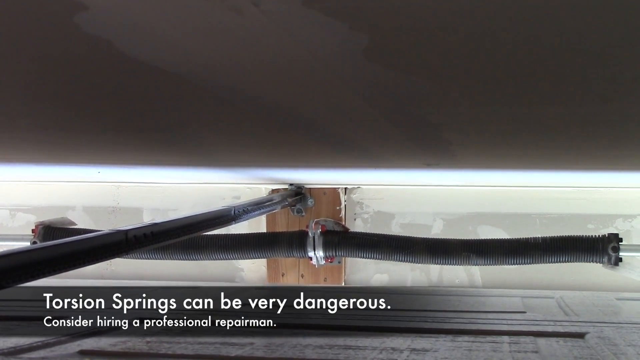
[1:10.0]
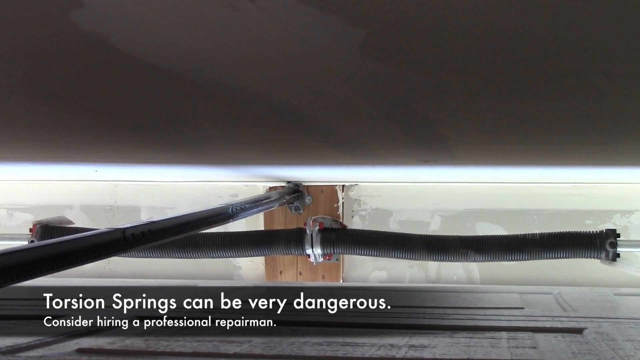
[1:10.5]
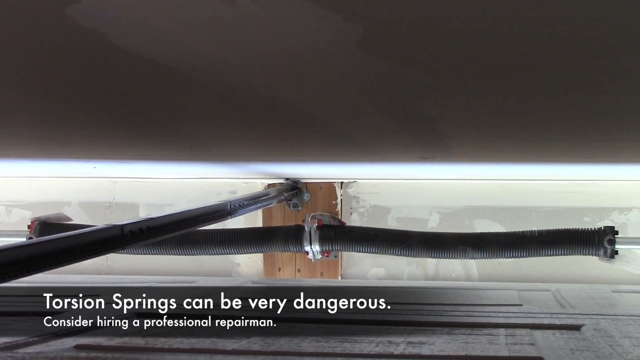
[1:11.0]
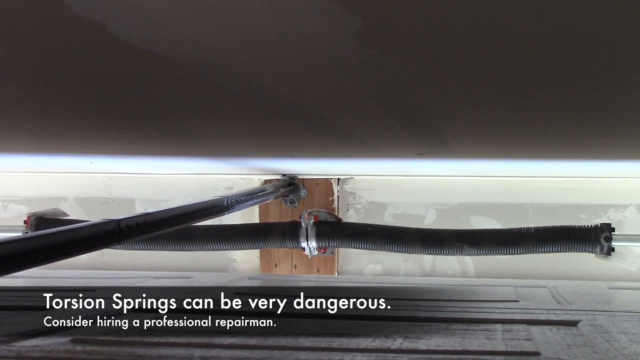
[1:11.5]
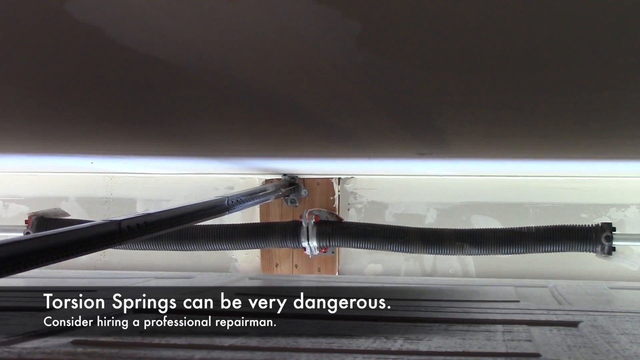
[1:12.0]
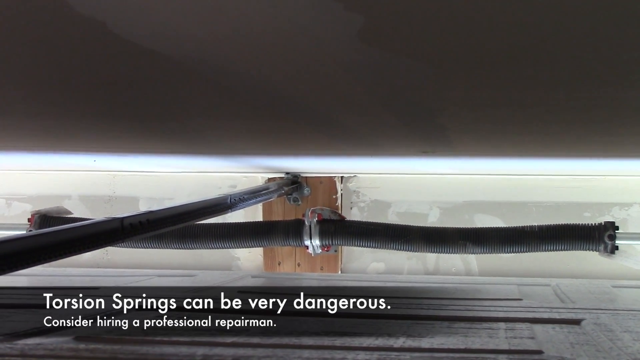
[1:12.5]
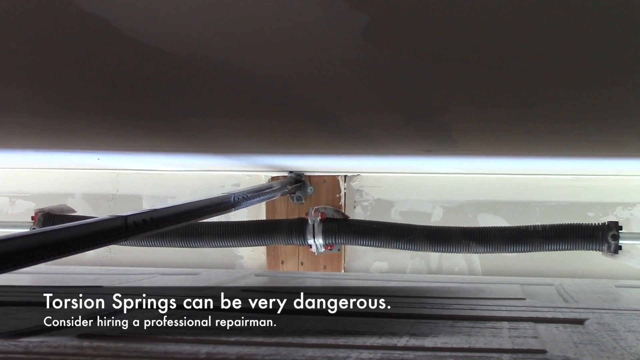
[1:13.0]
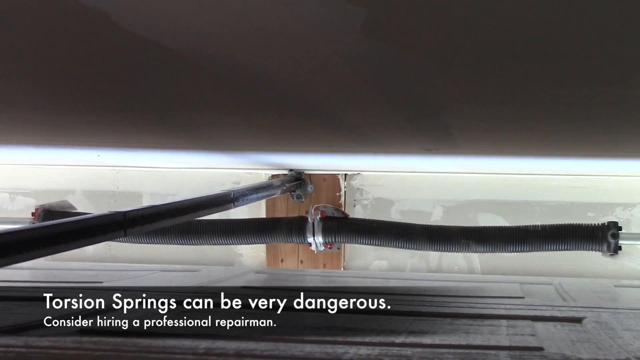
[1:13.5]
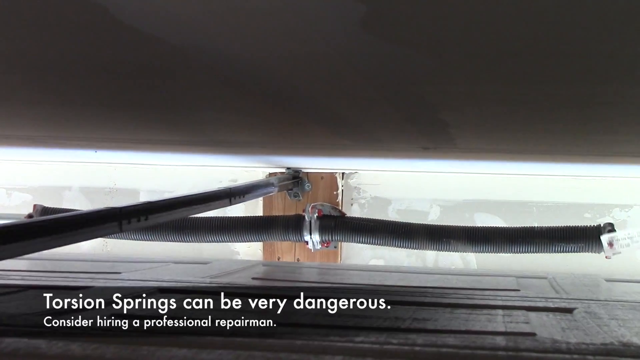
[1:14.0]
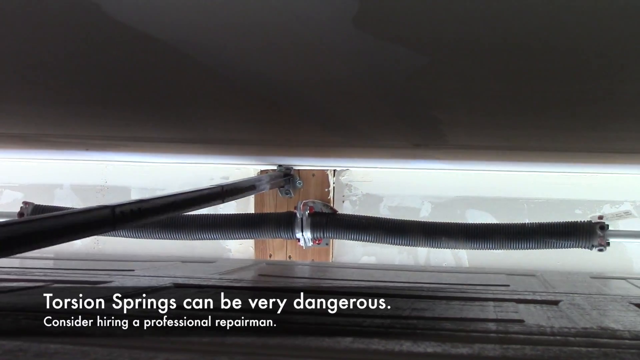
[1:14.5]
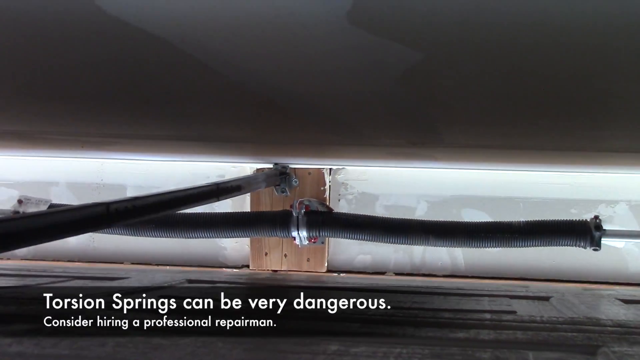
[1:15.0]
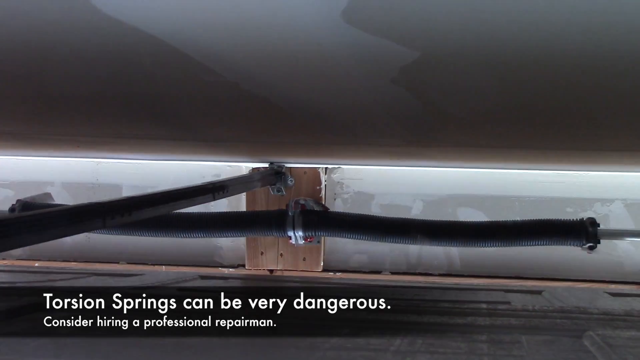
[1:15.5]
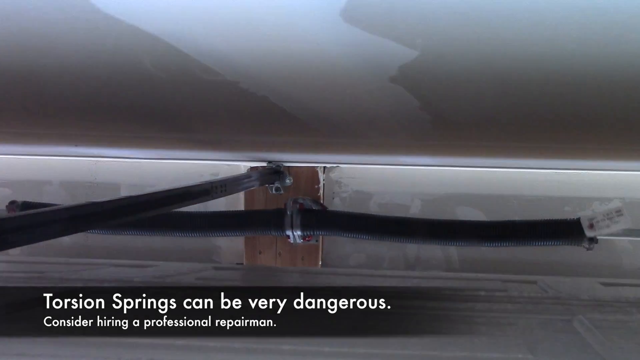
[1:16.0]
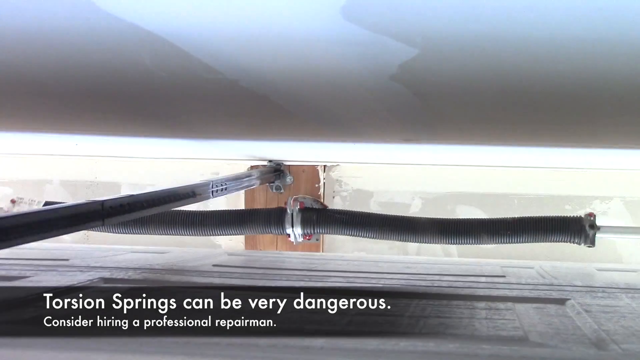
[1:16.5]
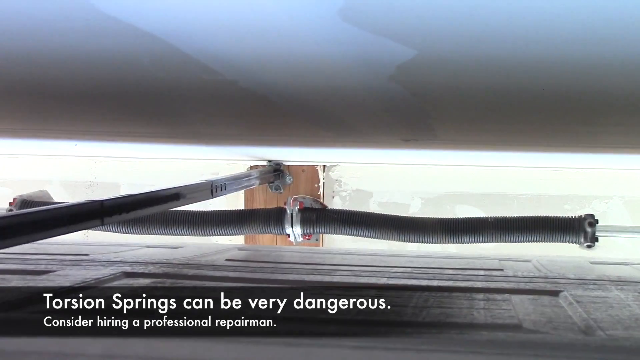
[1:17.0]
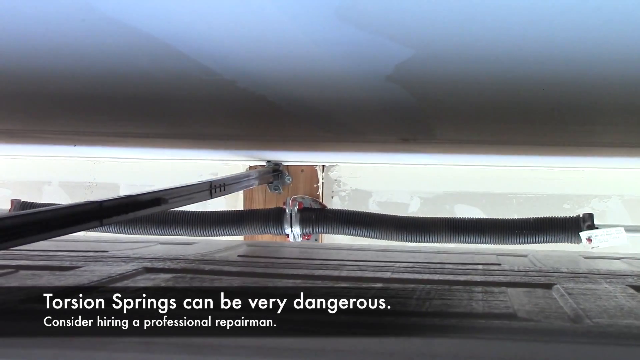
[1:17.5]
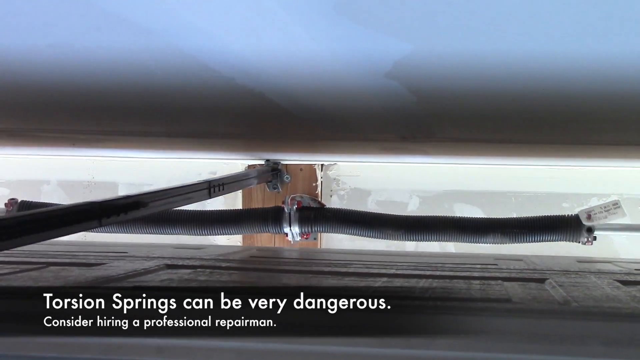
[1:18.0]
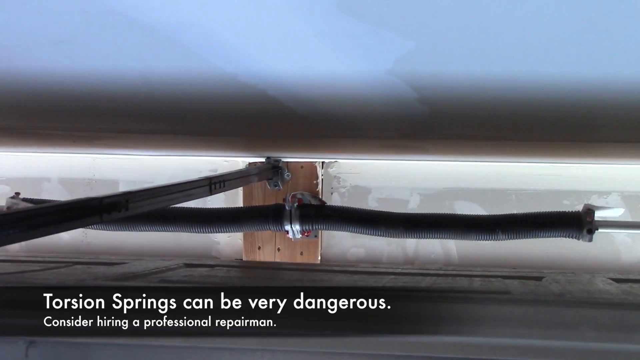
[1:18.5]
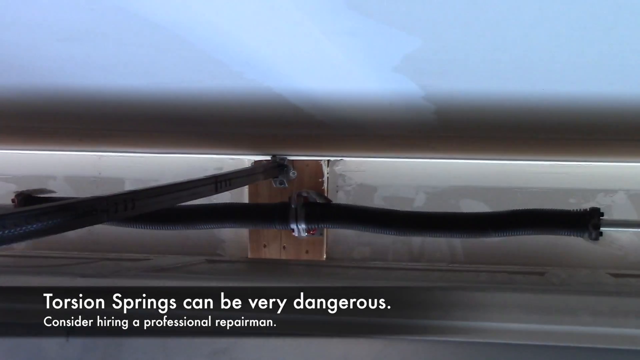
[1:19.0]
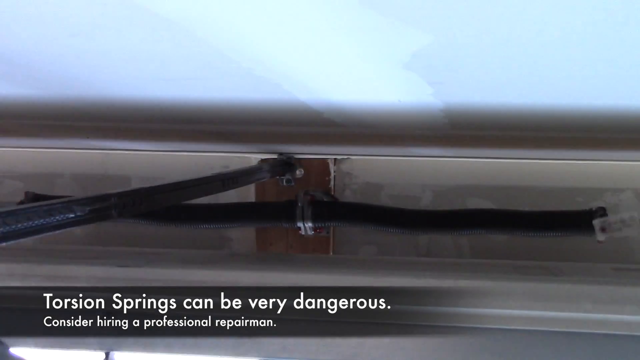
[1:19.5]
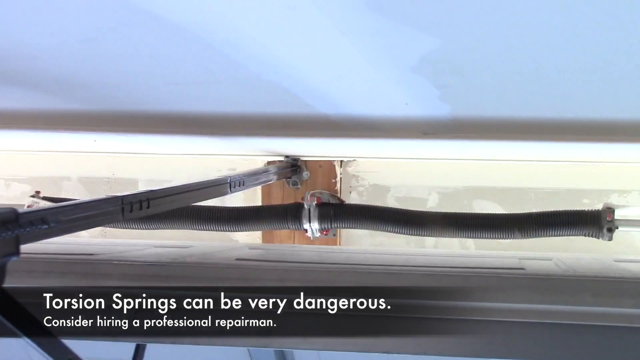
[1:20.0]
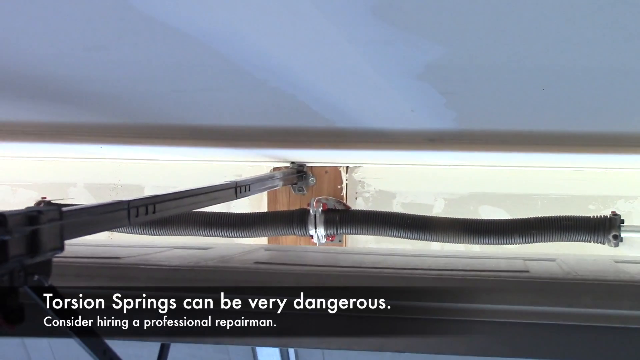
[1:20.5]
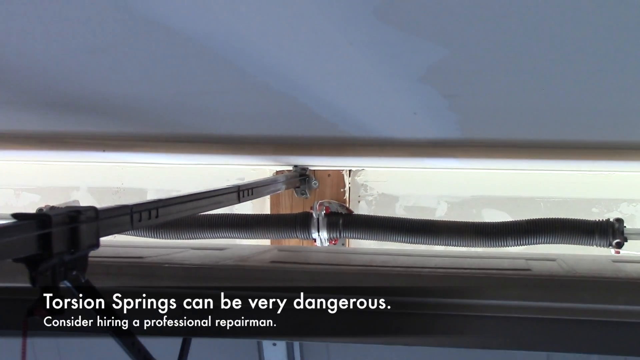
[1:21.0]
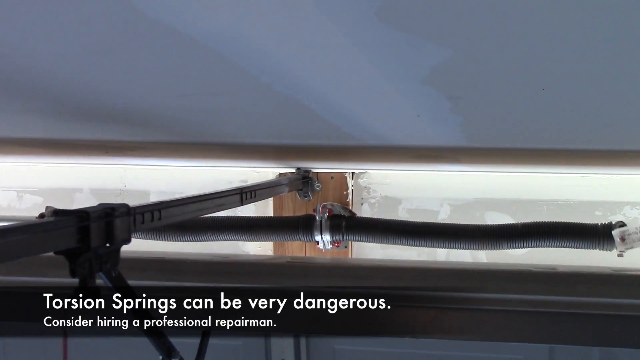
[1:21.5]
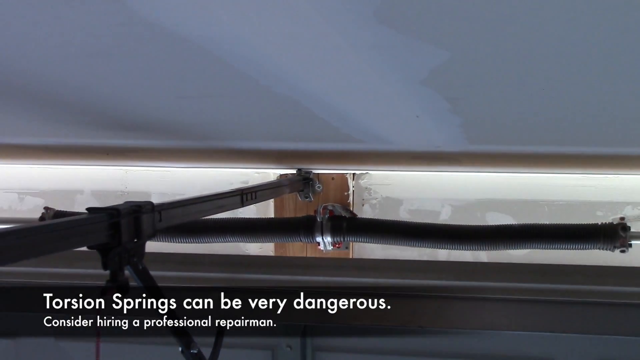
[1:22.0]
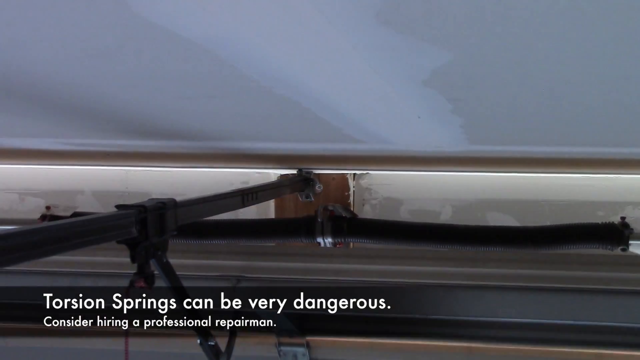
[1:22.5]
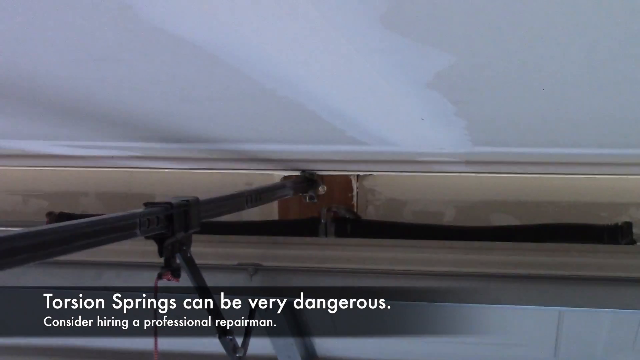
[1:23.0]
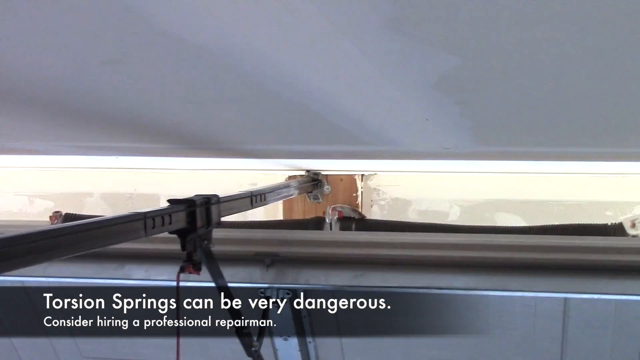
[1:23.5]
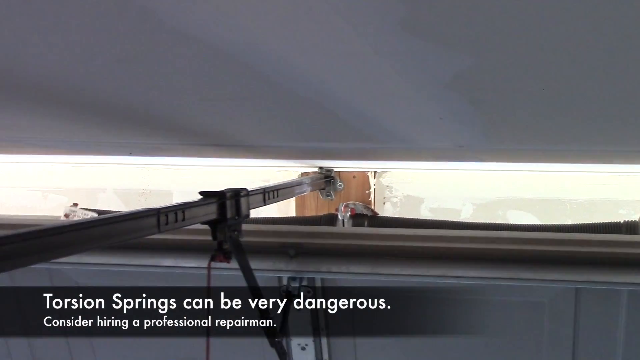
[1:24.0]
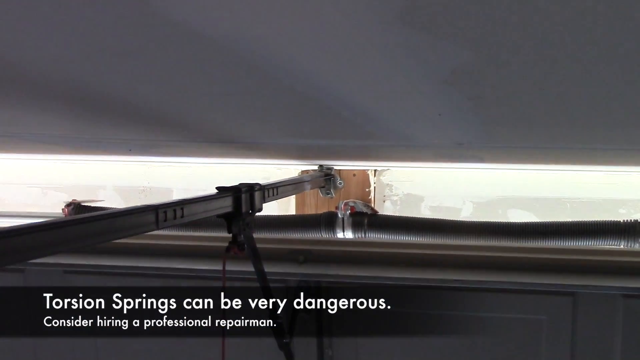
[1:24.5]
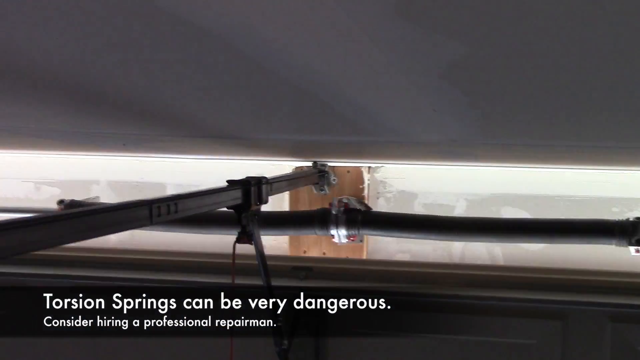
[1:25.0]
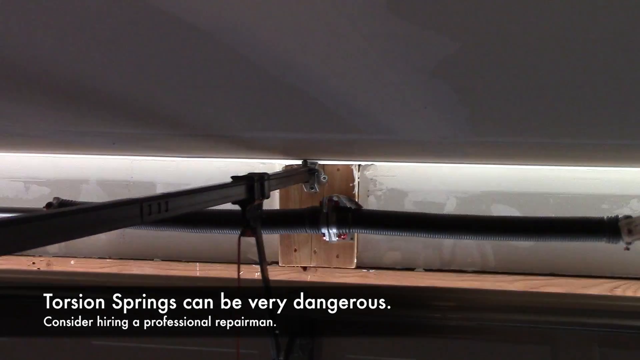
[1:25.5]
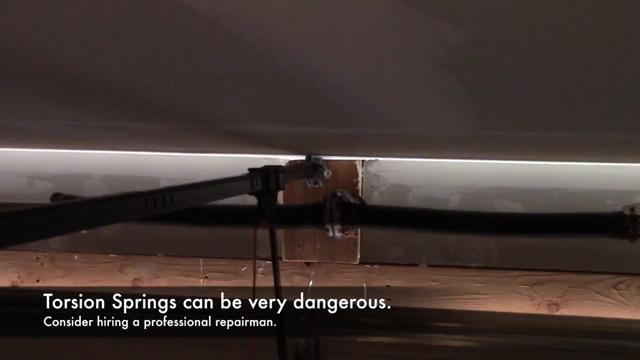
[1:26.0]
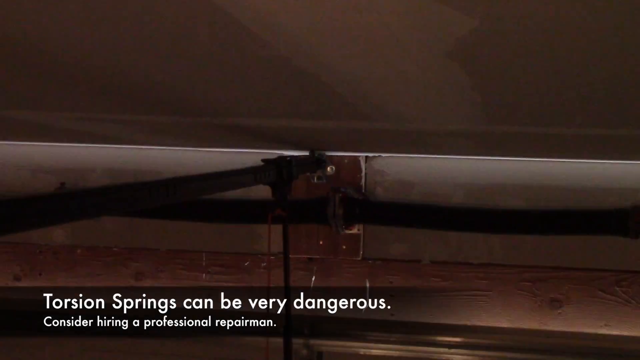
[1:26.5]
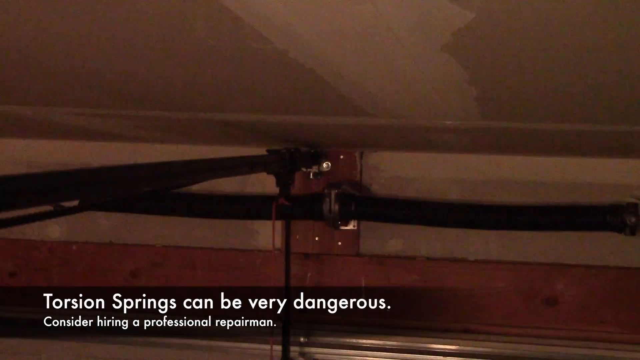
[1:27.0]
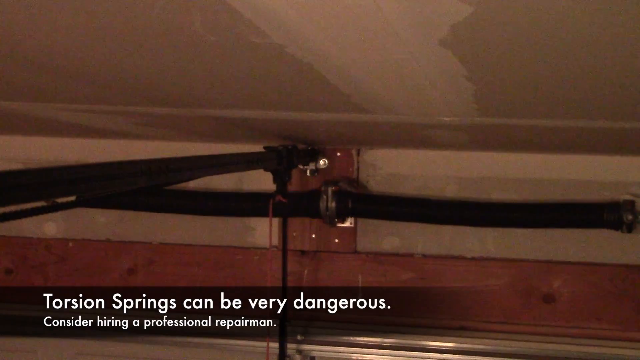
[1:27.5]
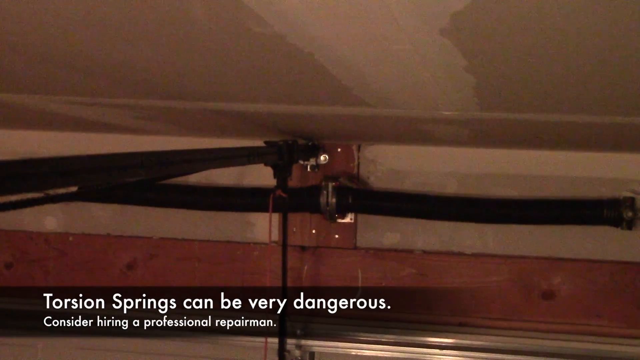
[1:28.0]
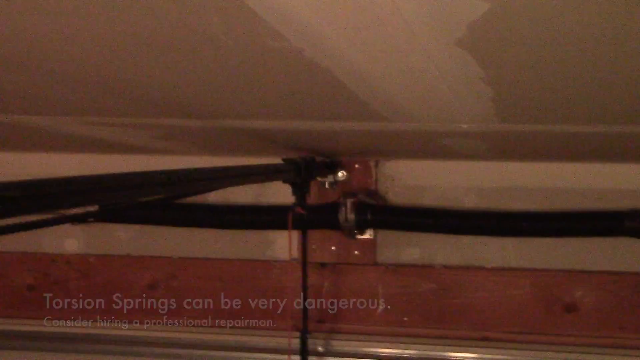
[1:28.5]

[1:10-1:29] Text on the screen reads "torsion springs can be very dangerous." There is a close-up of the garage door opener and the springs that kind of pull the garage door up and along the ceiling toward the back of the garage. The garage door then closes, with the springs kind of working in reverse. The text "torsion springs can be very dangerous, consider hiring a repairman" stays on the screen for this entire part. The footage is very unsteady, as if someone is holding a phone or a camera.